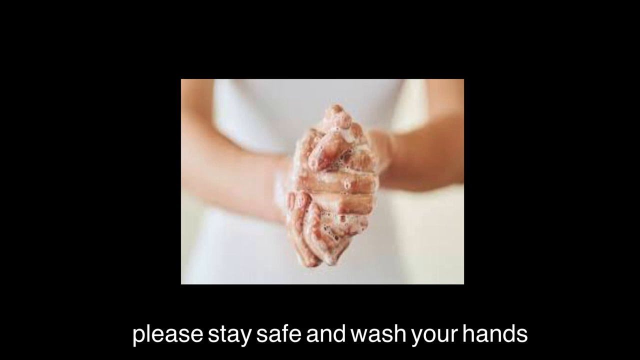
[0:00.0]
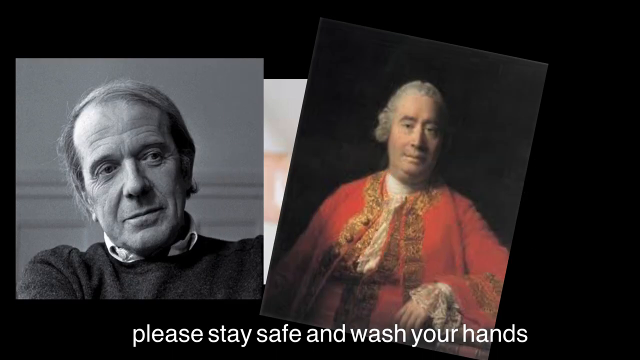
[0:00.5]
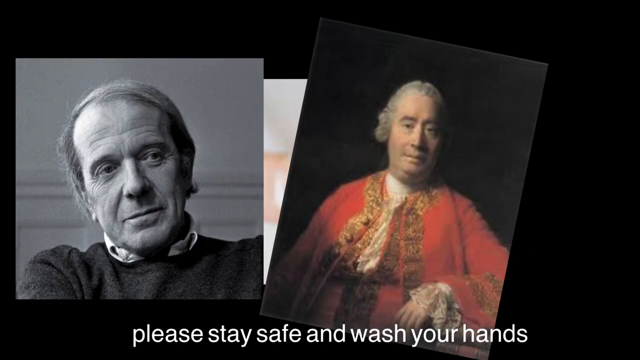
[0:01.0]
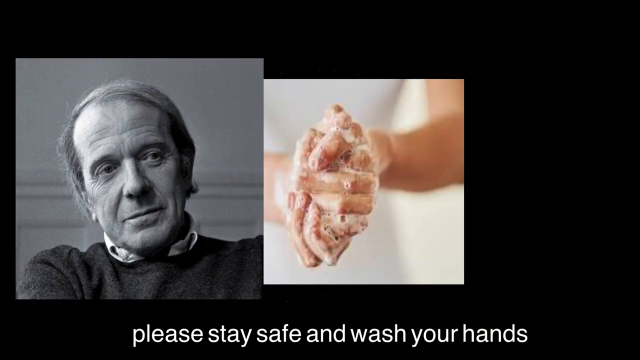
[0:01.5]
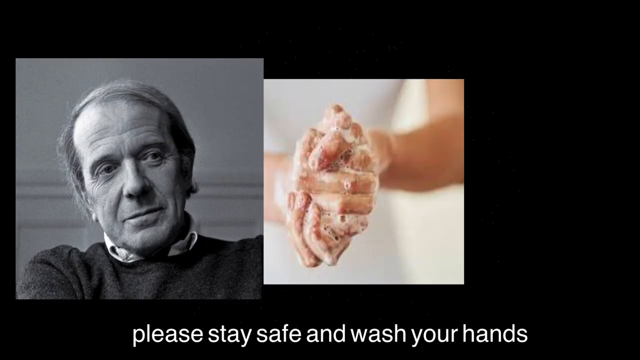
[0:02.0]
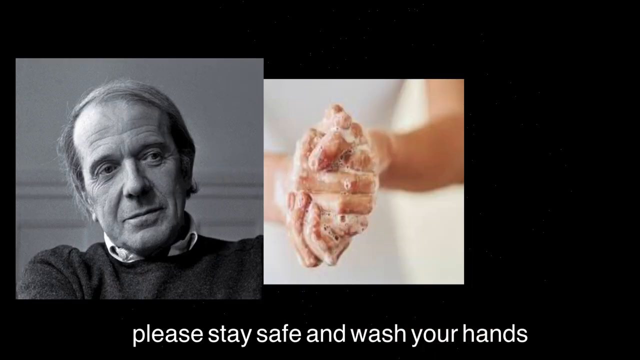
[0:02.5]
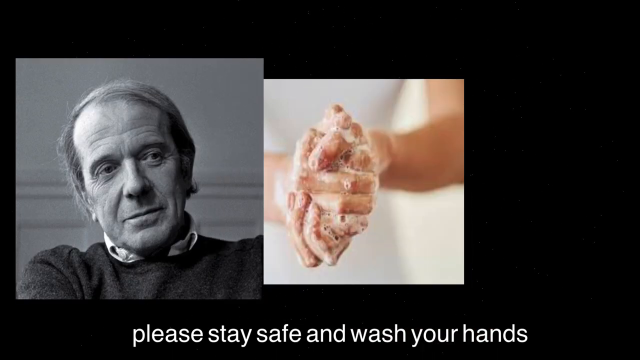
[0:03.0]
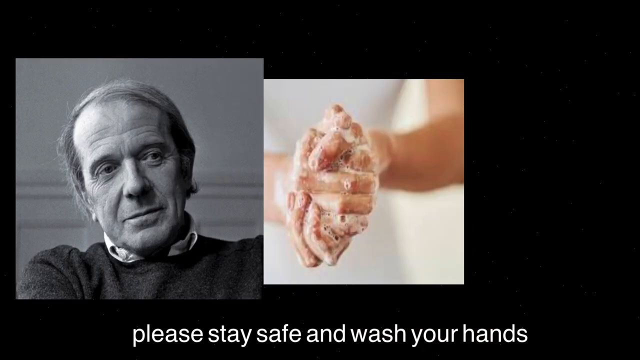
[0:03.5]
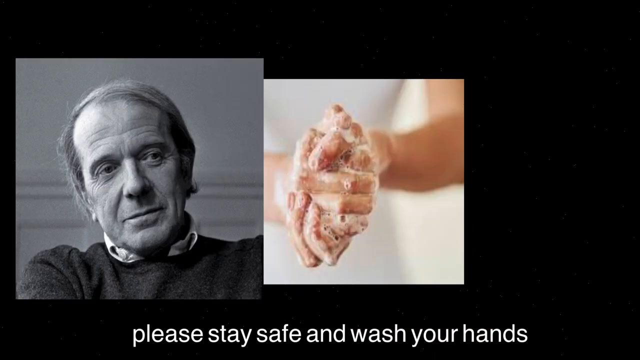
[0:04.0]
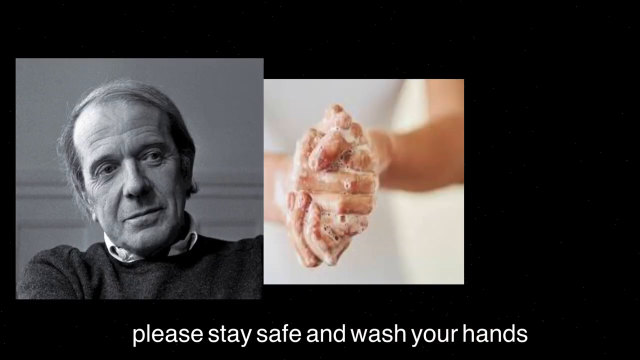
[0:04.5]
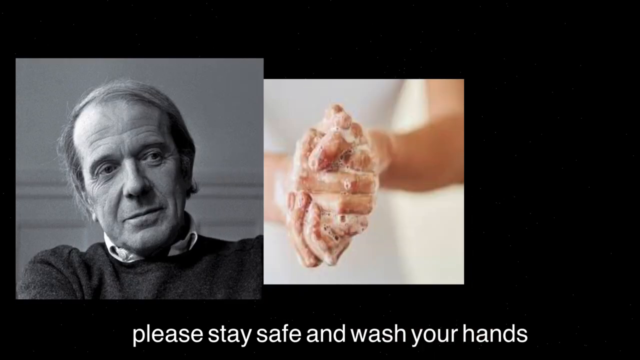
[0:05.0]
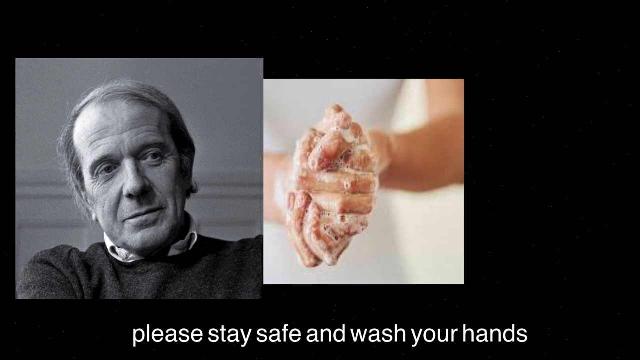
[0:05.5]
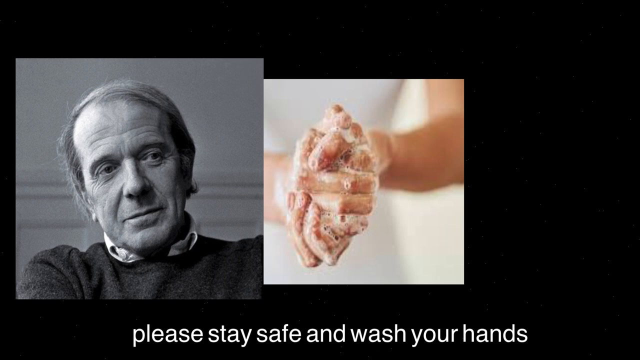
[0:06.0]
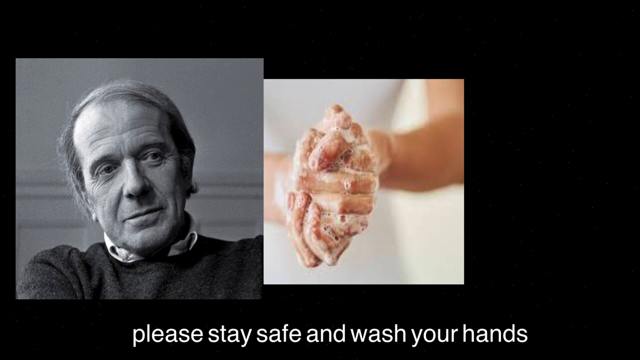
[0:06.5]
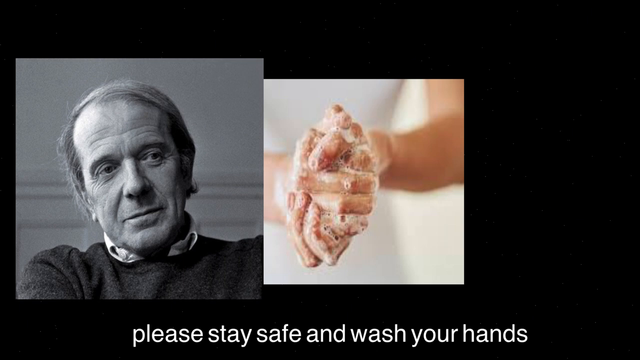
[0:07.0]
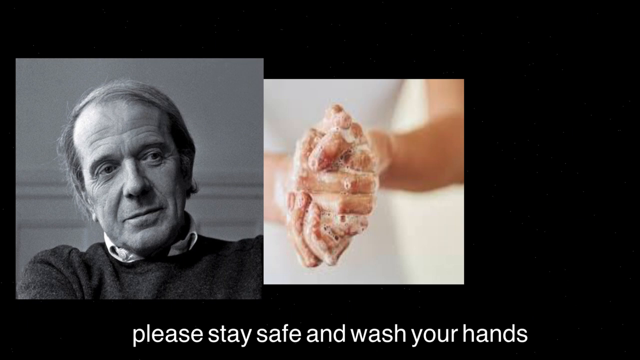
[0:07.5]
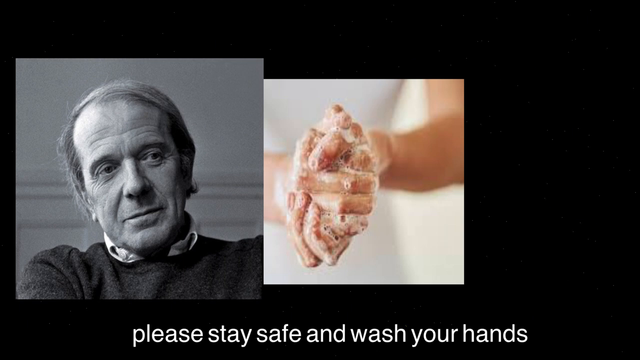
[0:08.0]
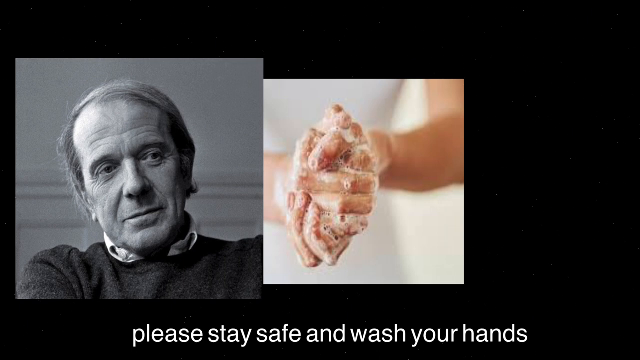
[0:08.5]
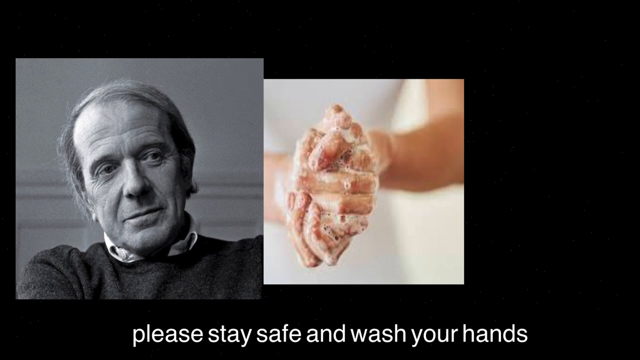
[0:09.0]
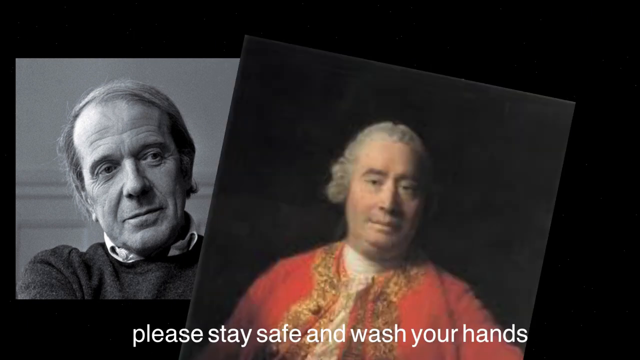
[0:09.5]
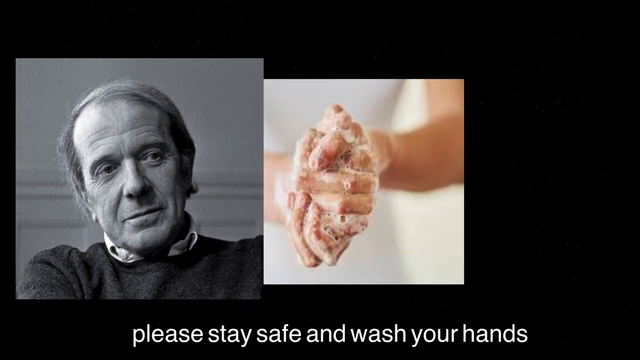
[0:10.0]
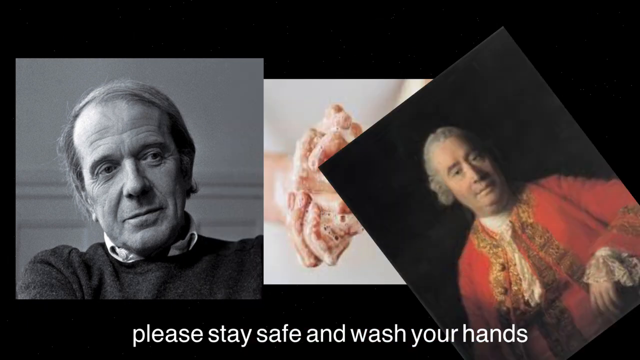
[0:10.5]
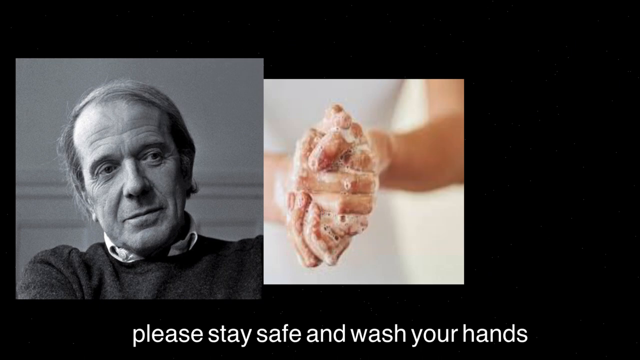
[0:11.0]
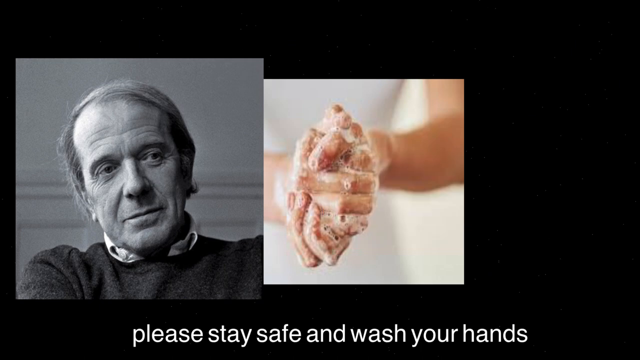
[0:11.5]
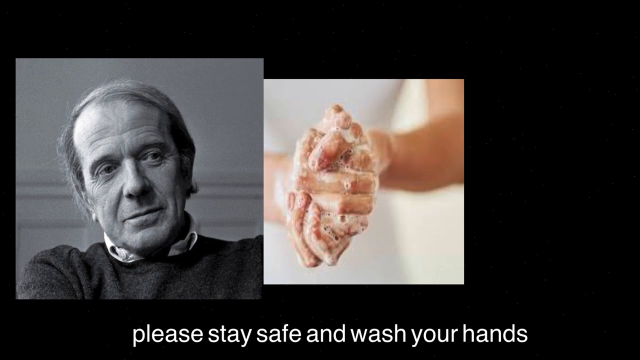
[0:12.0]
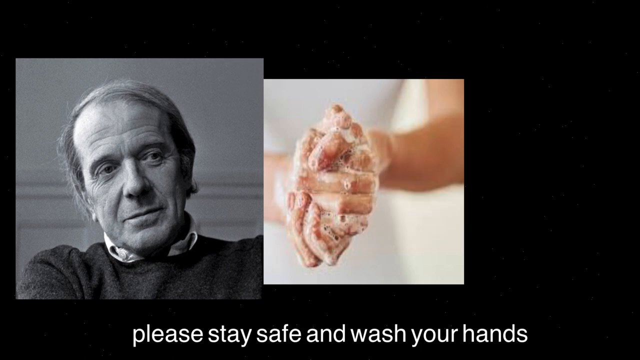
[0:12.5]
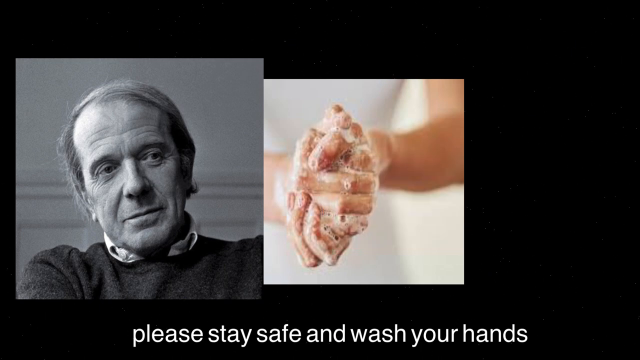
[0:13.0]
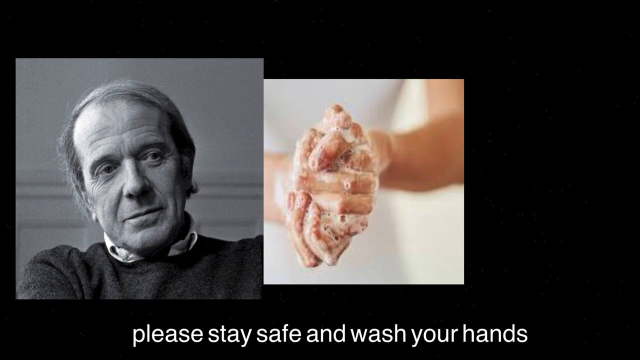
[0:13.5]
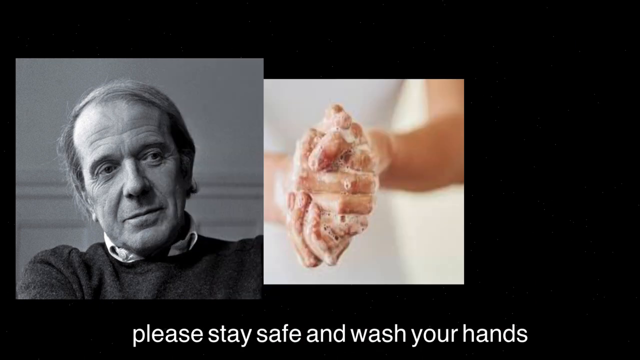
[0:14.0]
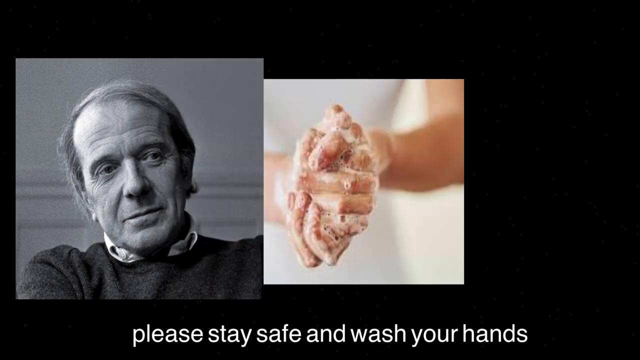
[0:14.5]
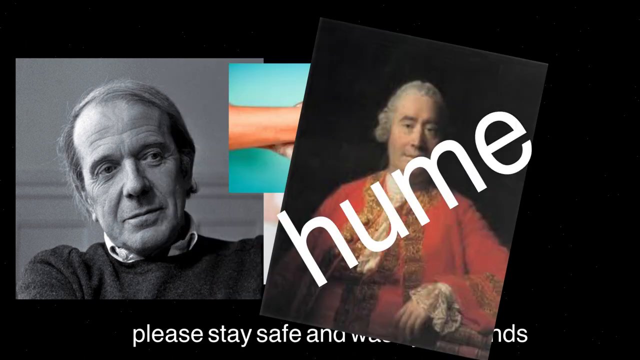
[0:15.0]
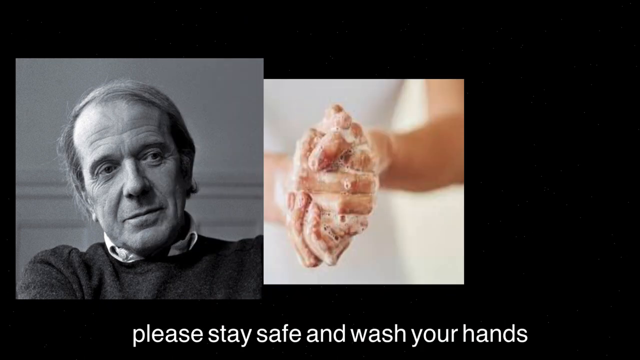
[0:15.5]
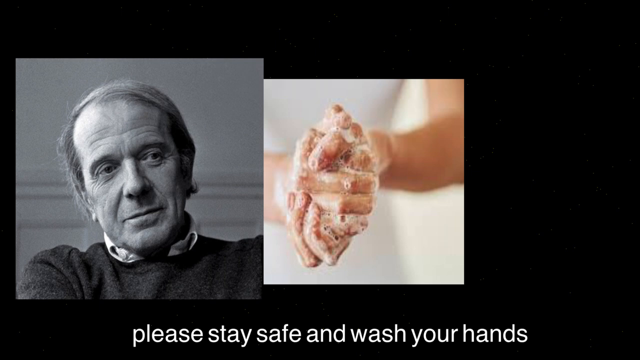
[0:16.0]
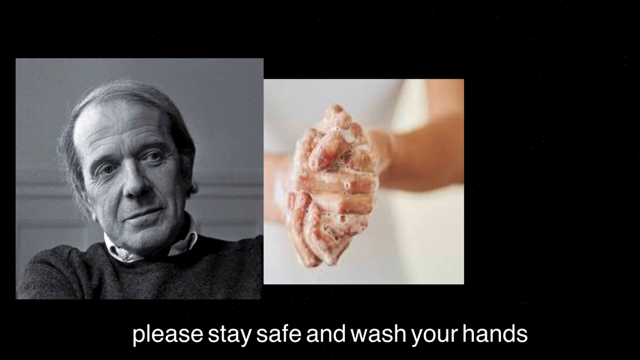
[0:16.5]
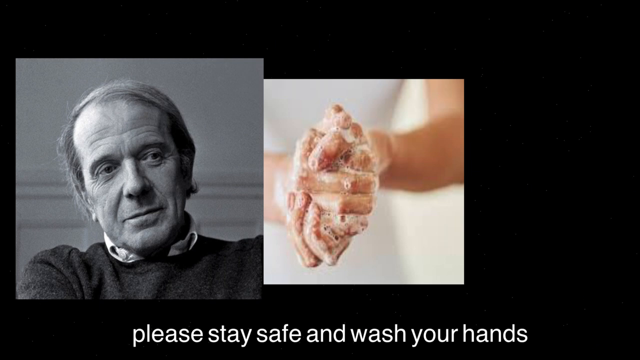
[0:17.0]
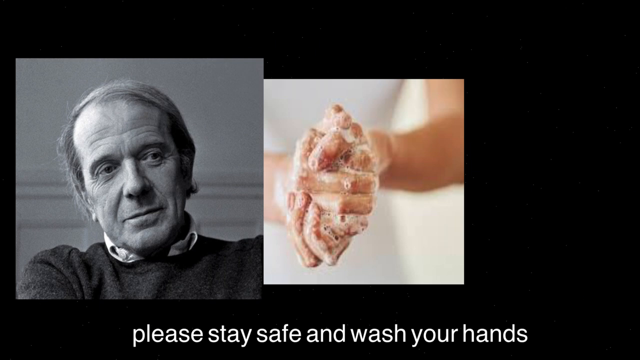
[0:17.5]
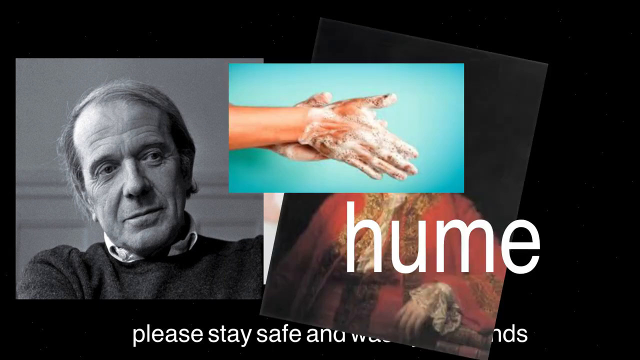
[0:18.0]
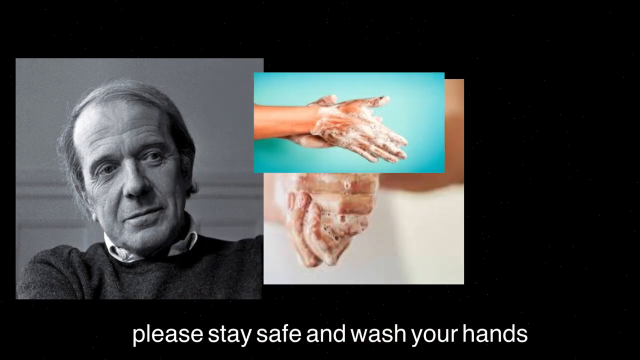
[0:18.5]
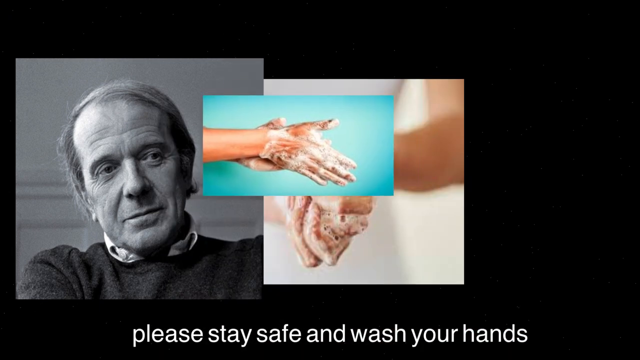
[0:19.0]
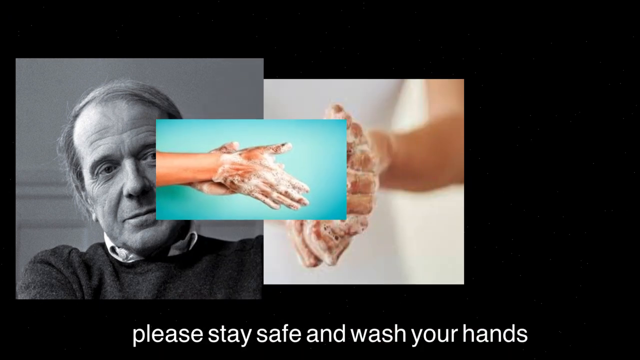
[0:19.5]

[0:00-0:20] The video opens on a black background with a black-and-white image of an older man and, beside it, a colour photo of hands being washed with soap. Below them, in fairly large text, is written "please stay safe and wash your hands". These two images and the text remain on screen while other images flash up. One of these appears to be an old picture of a person posing, probably from around the 1600s, and pictures of him flash repeatedly, along with the word "human" written in a font. The shot ends on the black background with an image of a person in a white top washing their soapy hands, focusing on the hands only, while the text "please stay safe and wash your hands" stays below.